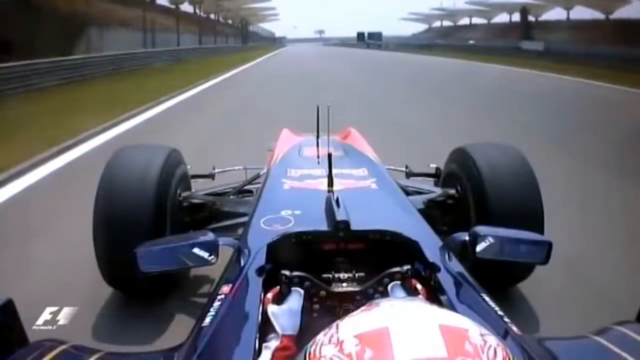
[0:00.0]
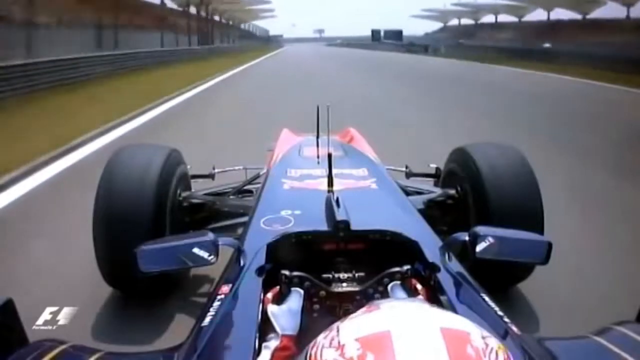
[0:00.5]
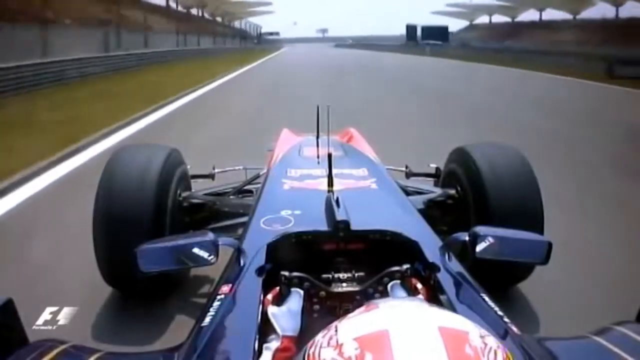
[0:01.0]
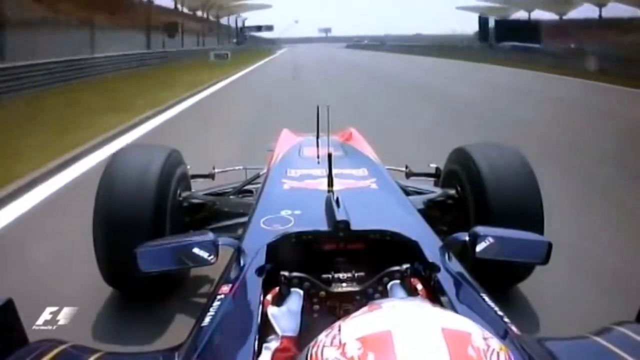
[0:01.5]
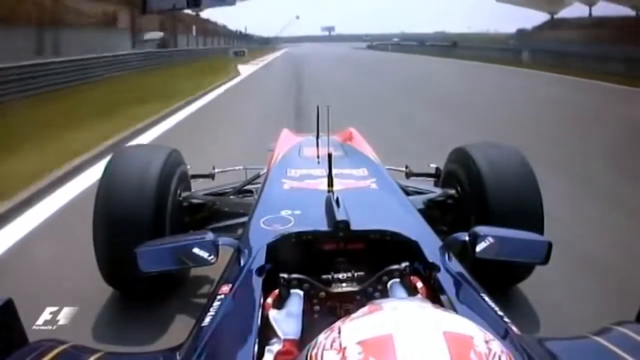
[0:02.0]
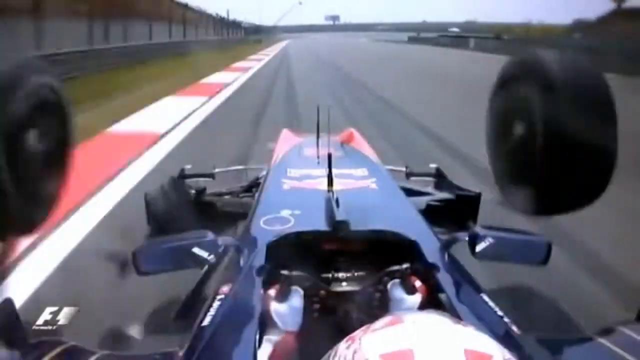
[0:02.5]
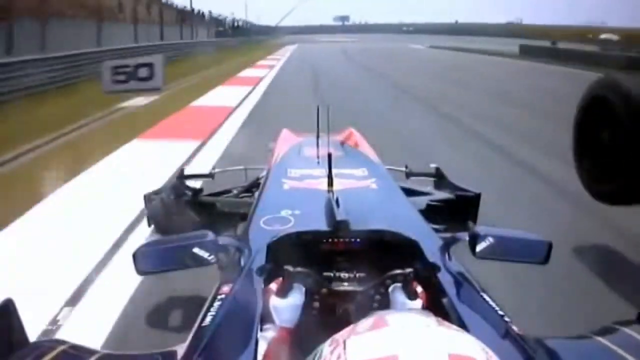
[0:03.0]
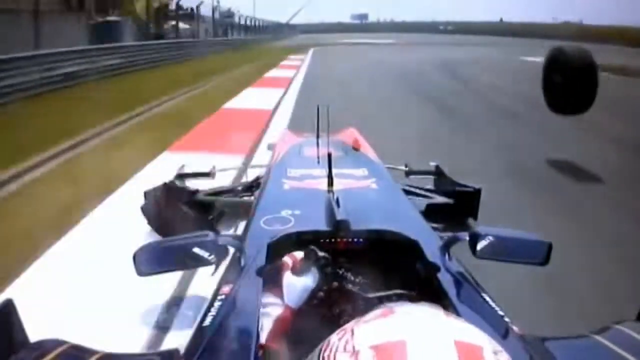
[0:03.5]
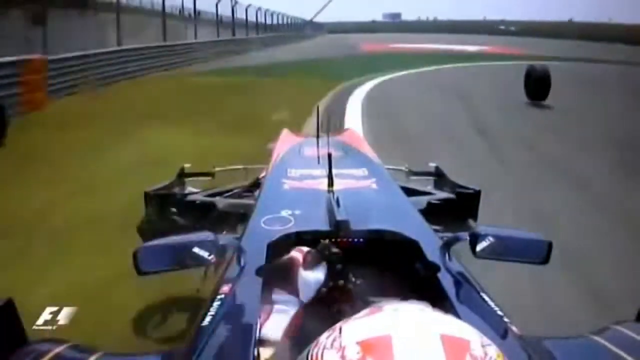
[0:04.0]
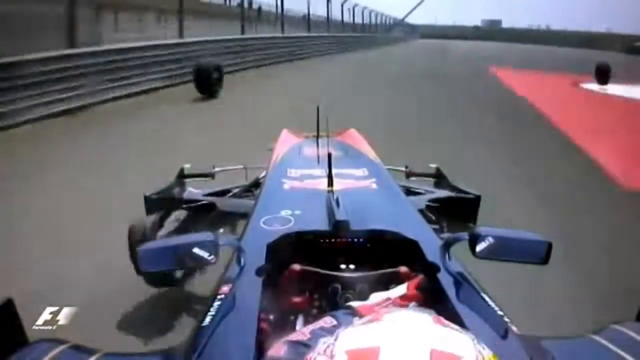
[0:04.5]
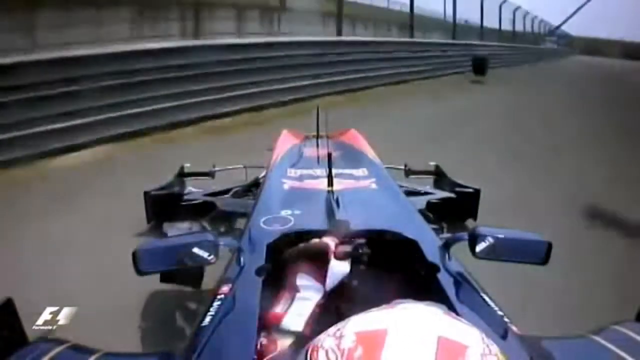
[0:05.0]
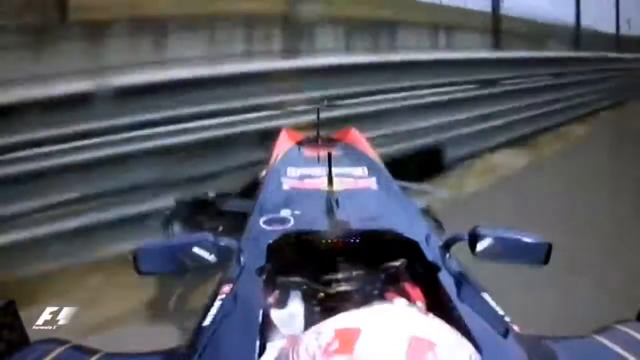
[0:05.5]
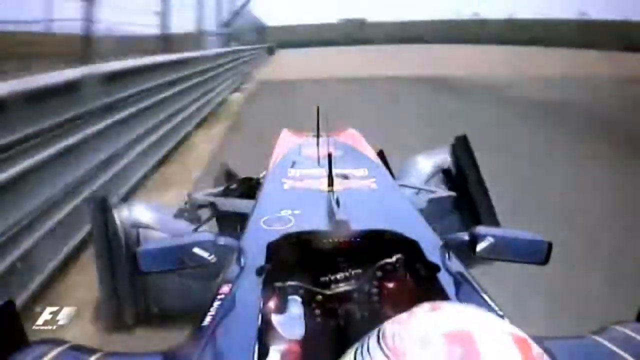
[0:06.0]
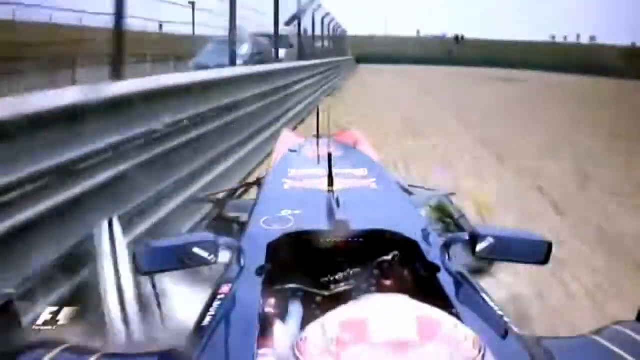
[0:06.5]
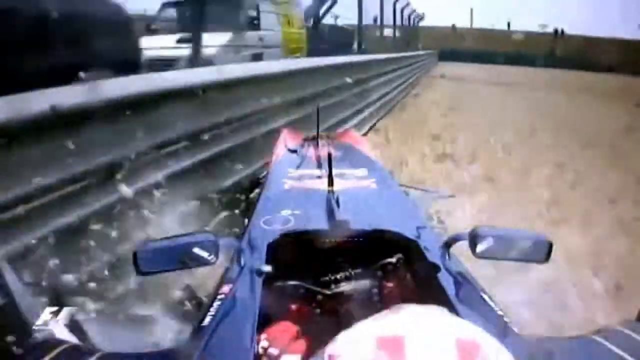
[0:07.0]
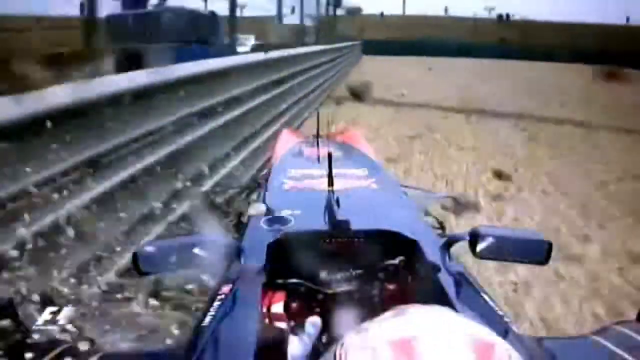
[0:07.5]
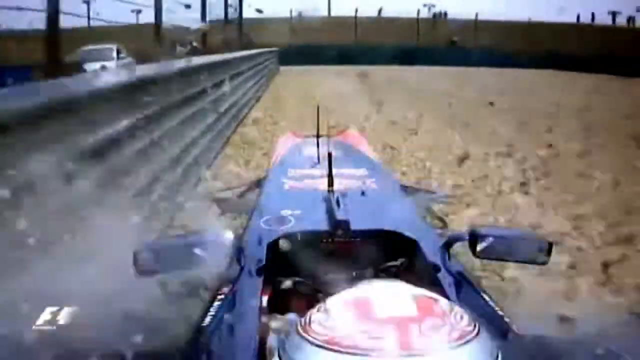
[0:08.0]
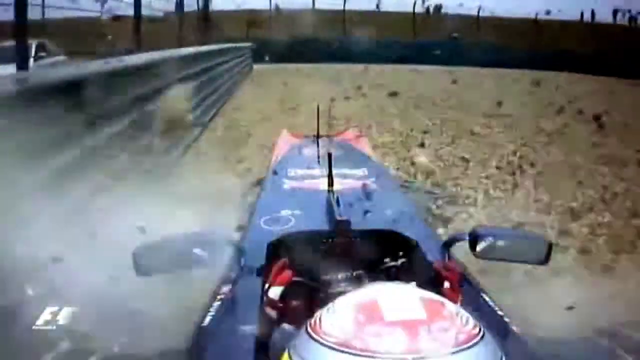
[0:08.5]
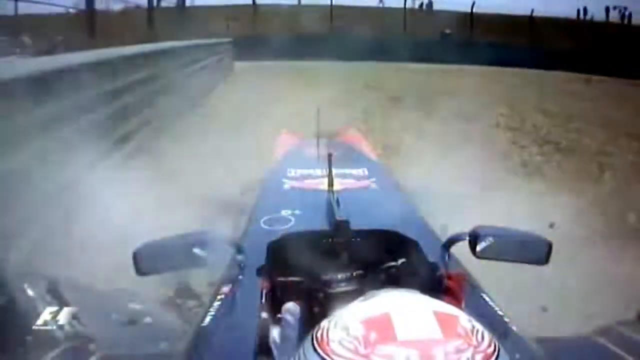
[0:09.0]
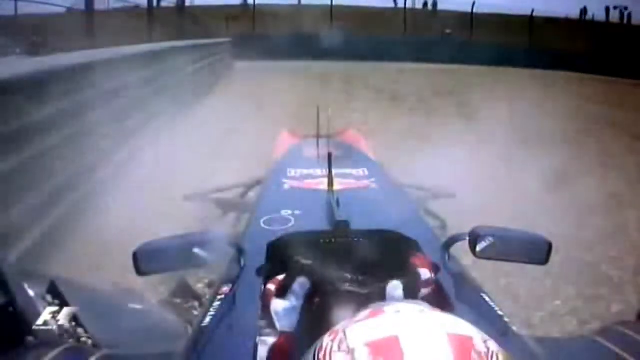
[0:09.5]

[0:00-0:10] From the point of view of a race car driver, in what looks like a Formula 1 style race, the top of the driver's helmet and his hands on some type of steering device are visible. He is driving a blue Formula 1 car, and only the front two tires are seen: big, thick black racing tires. He drives on a racetrack by himself, apparently somewhere outside. While he is going straight, the front two tires suddenly explode and come off the vehicle. The driver keeps his hands on the steering wheel and tries to maneuver the car, which goes off the racetrack and drives straight into some type of dirt pit that keeps the car safe.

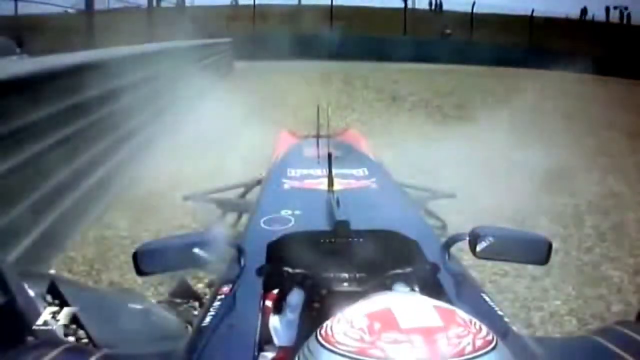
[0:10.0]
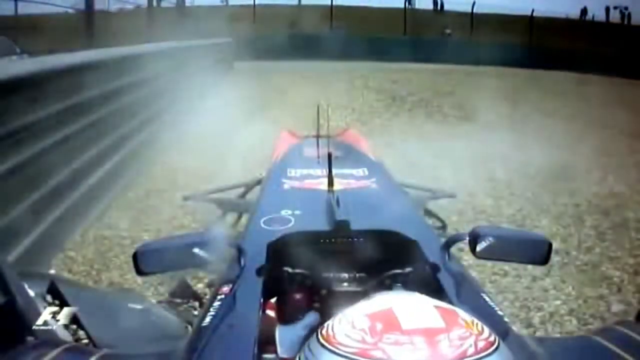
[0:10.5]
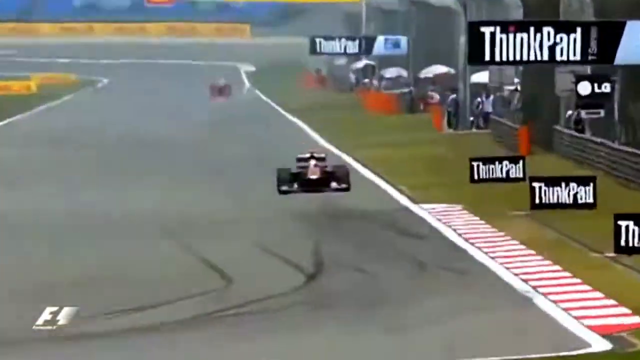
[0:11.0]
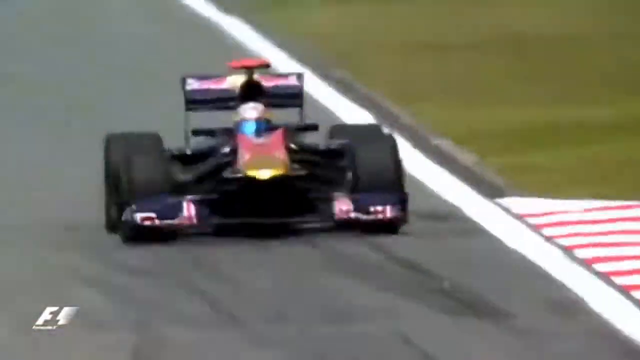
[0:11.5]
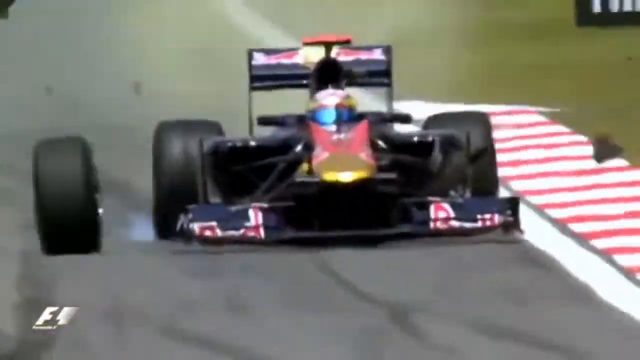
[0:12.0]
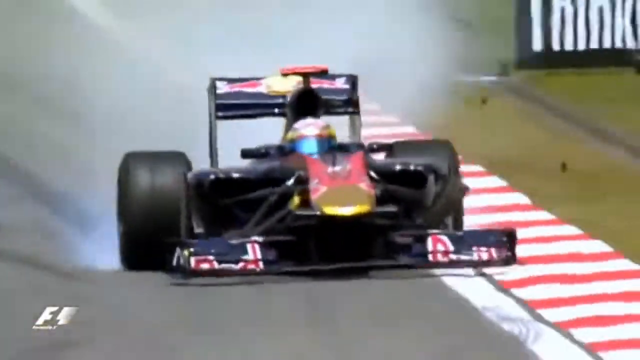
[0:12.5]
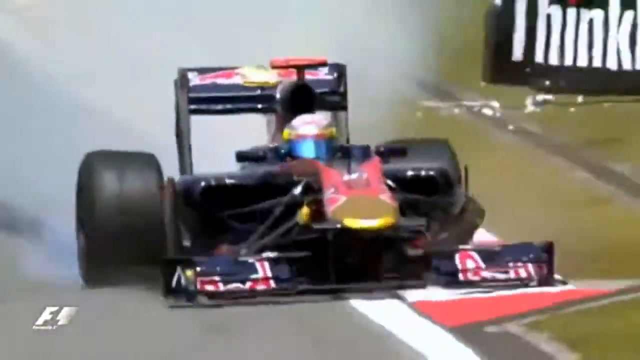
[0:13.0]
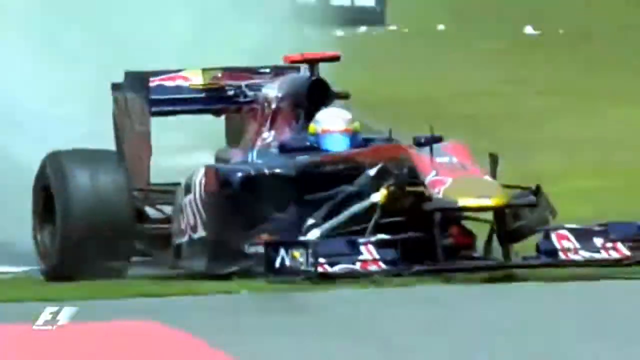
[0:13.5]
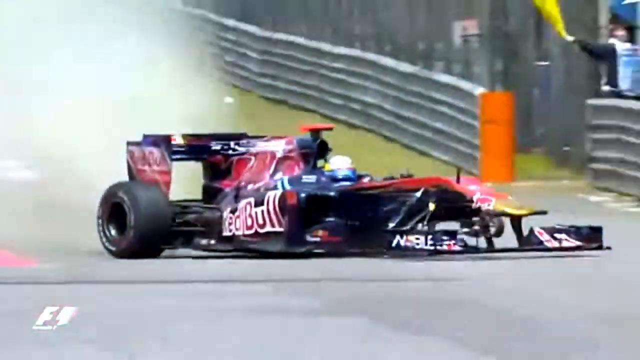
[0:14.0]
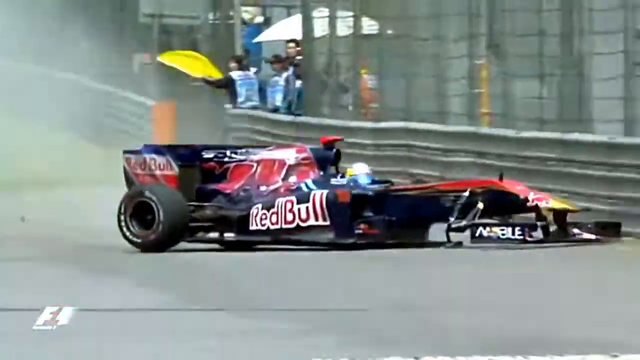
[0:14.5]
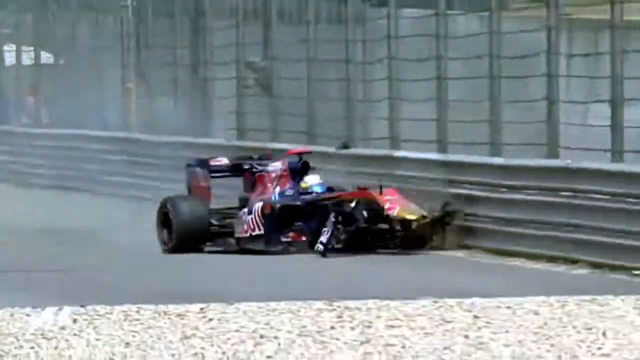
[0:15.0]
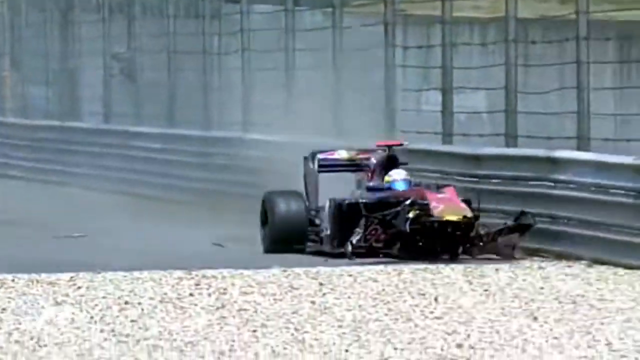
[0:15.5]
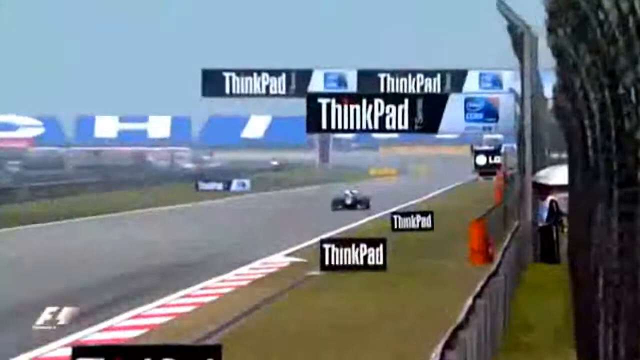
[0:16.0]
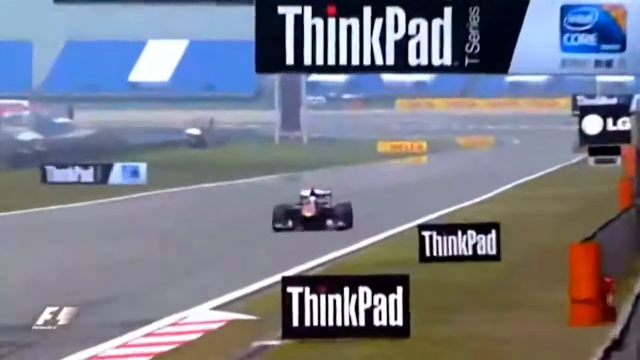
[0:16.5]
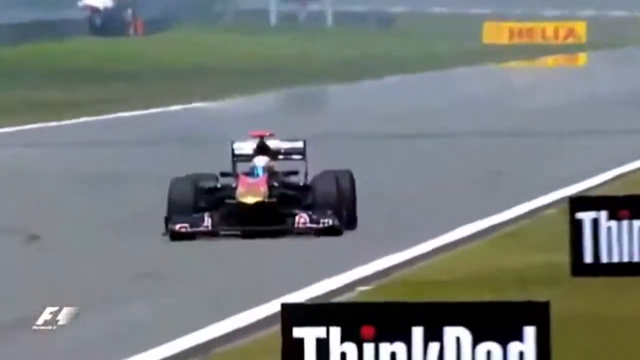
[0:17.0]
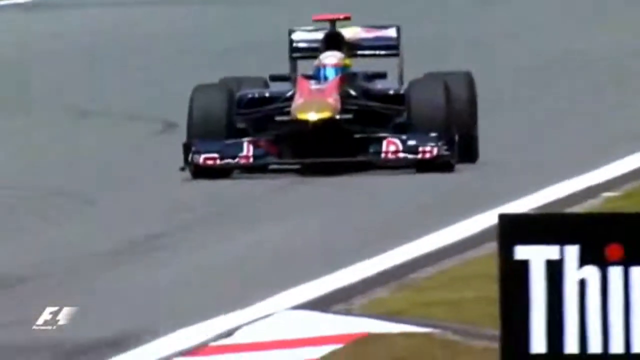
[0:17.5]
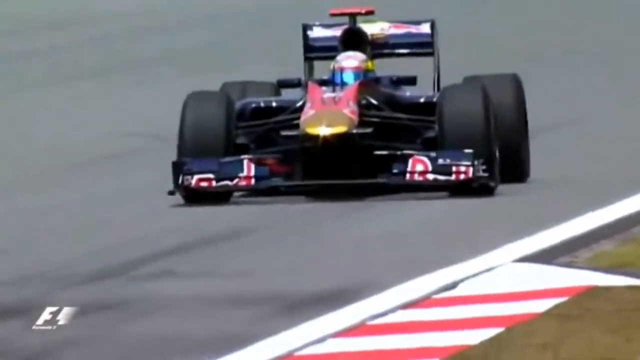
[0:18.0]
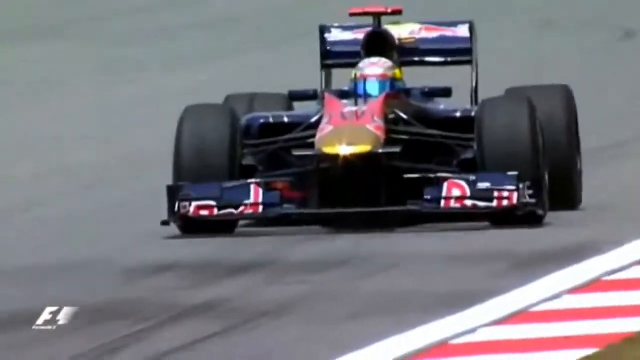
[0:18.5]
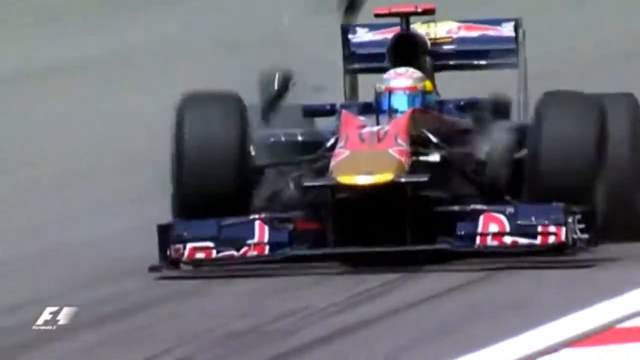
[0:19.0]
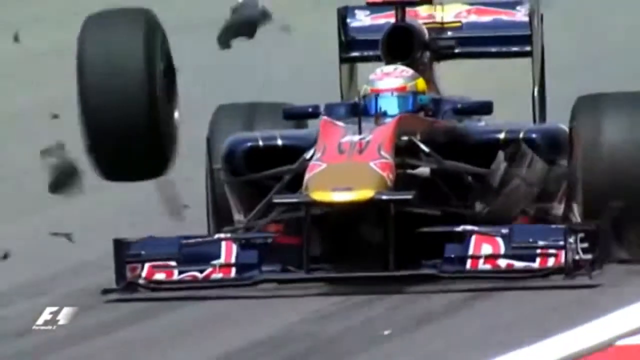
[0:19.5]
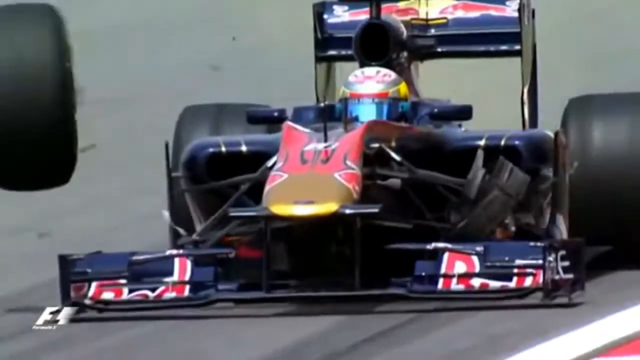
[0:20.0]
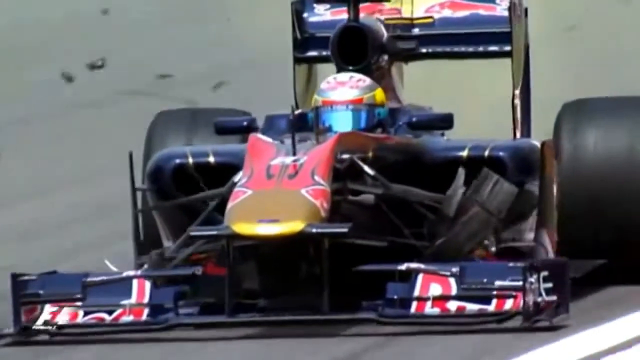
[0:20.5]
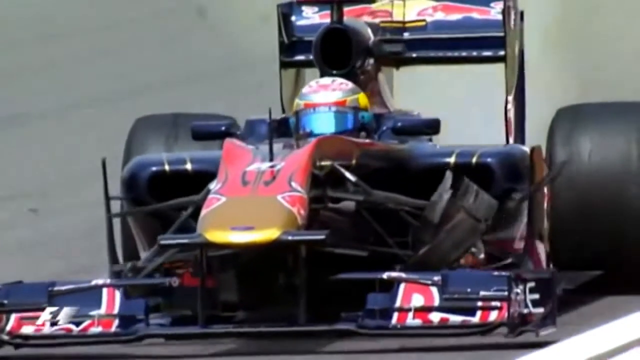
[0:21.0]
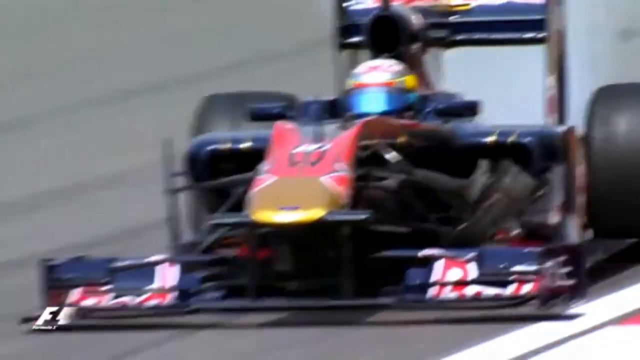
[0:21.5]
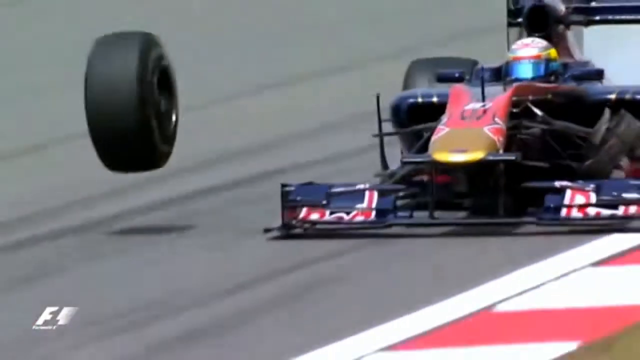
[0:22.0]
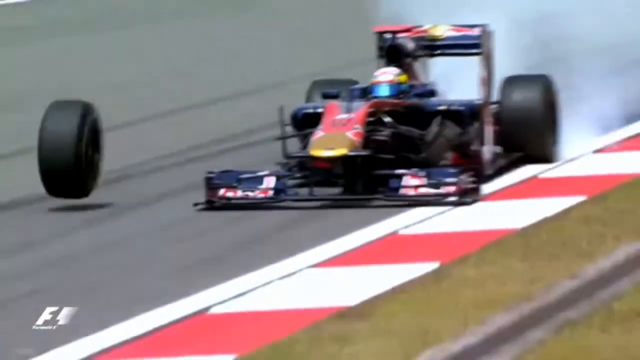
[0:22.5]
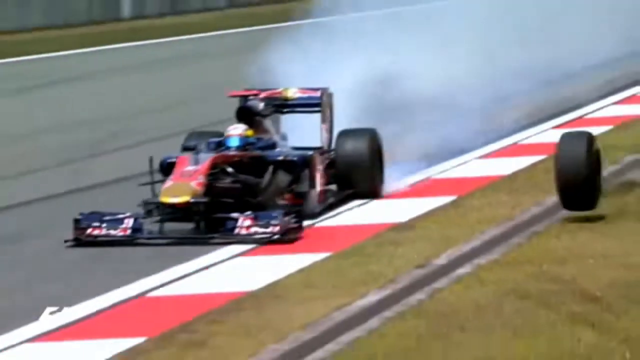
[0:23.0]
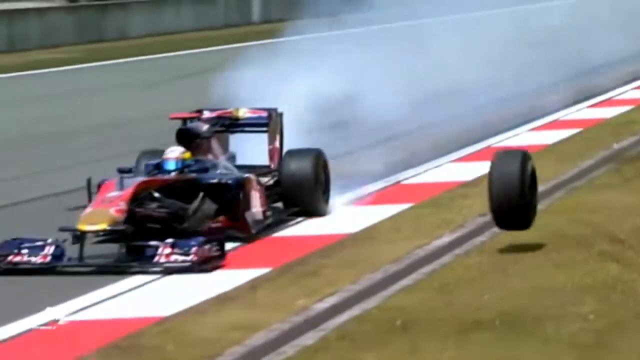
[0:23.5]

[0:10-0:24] The same incident is shown from a TV spectator's perspective, with the car driving toward the camera. The blue Formula One race car is visible in more detail; it is sponsored by Red Bull, with Red Bull signage on the fin and on all sides of the car, including the driver's helmet. The driver comes over a curve and suddenly the front two tires explode off the car. After the explosion the car makes a drastic left turn, crashes into the fence, and lands in the brown dirt pit. The driver seems to keep his calm throughout, keeping his head straight. The back two tires stay on the vehicle; only the front two blow off. In the last part, ThinkPad signage is visible all around the racetrack.